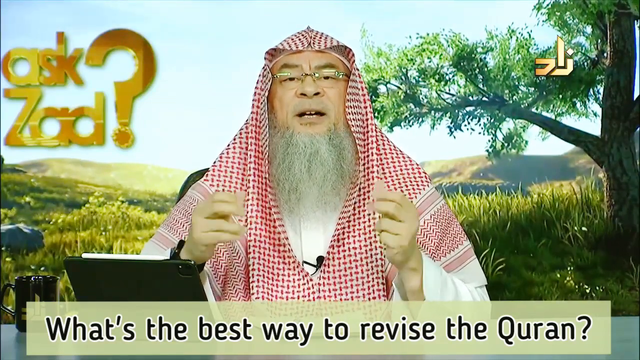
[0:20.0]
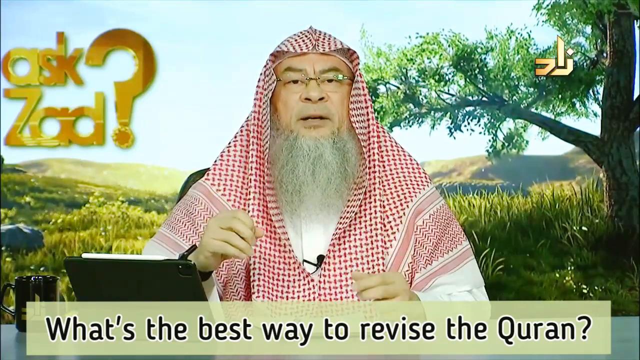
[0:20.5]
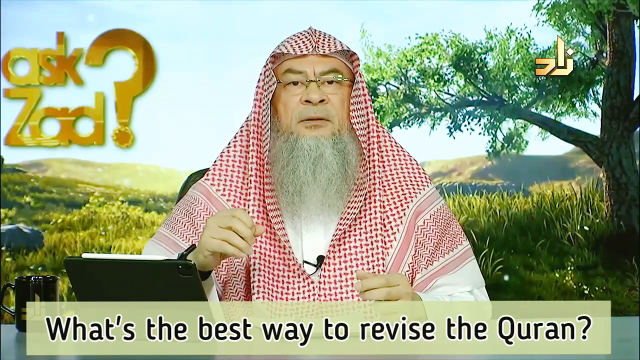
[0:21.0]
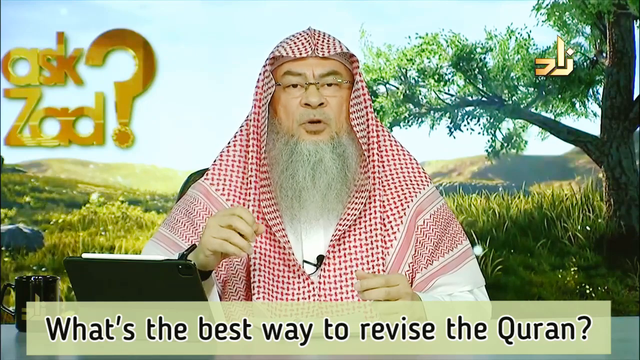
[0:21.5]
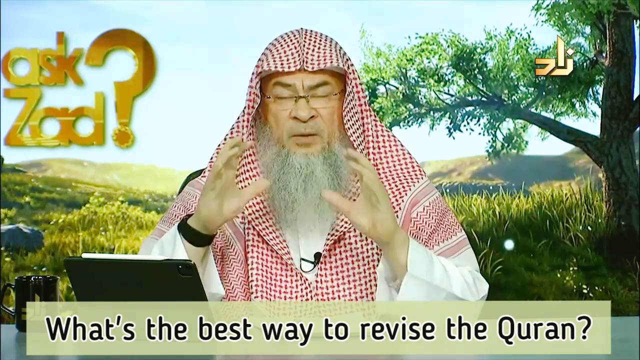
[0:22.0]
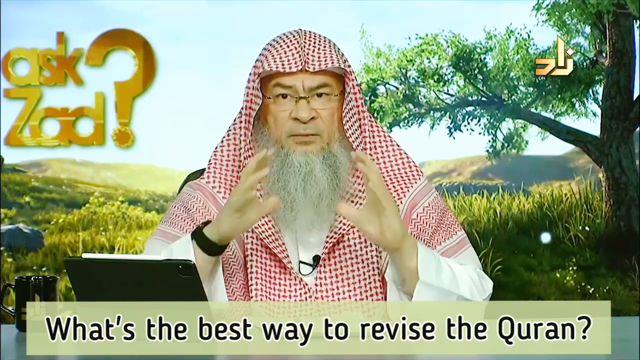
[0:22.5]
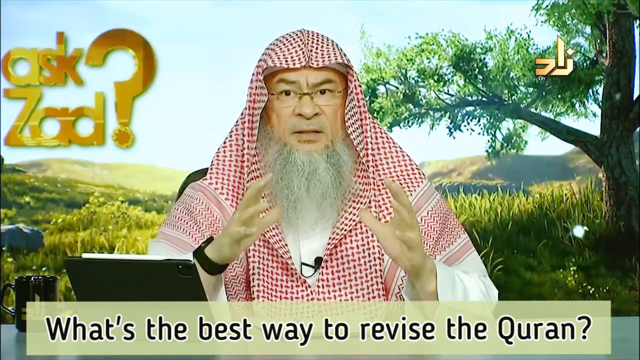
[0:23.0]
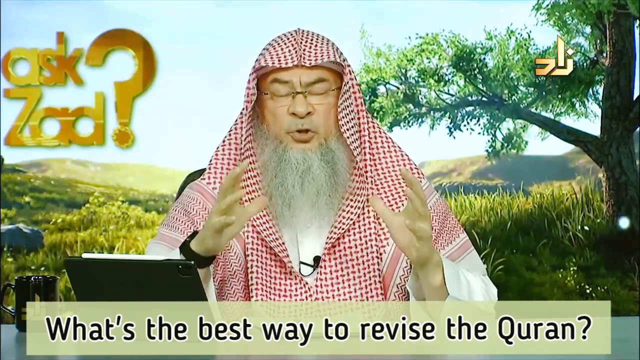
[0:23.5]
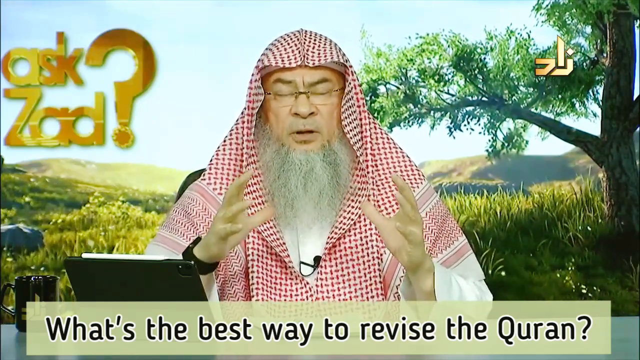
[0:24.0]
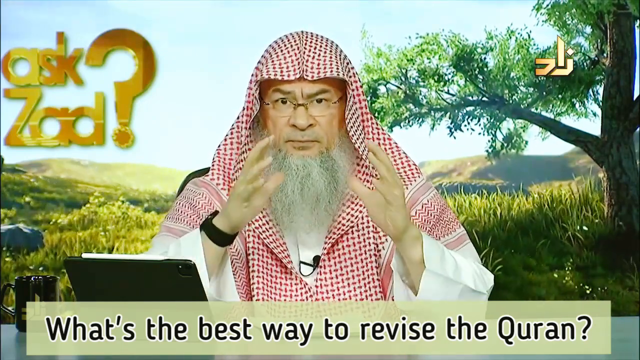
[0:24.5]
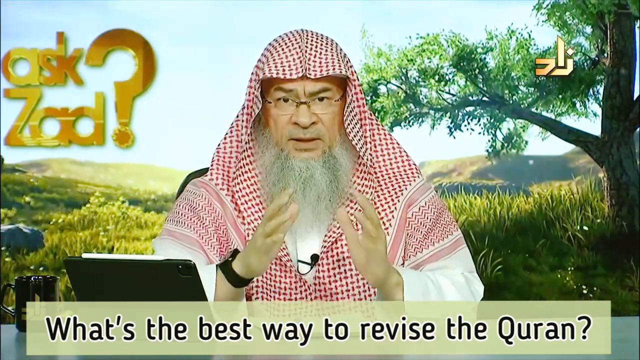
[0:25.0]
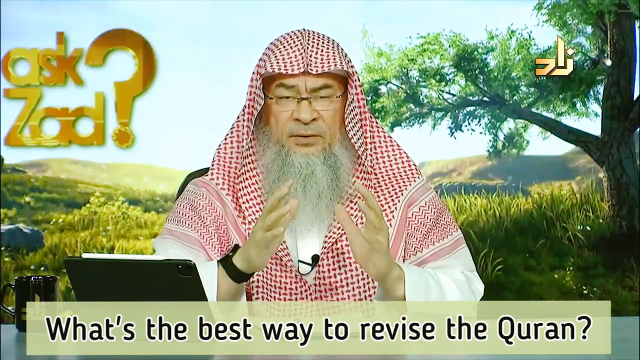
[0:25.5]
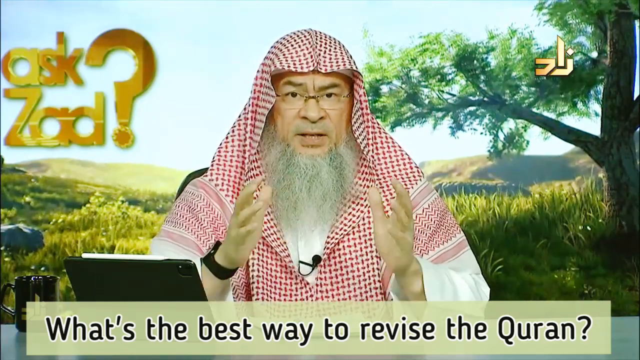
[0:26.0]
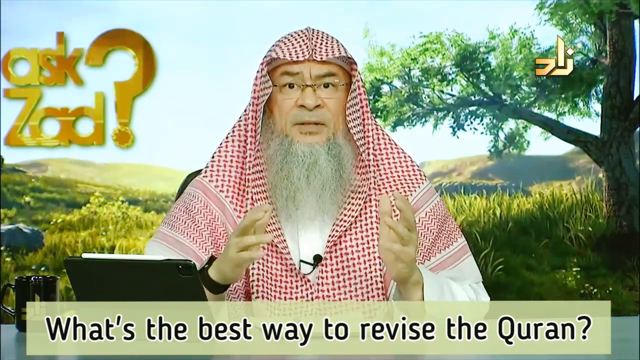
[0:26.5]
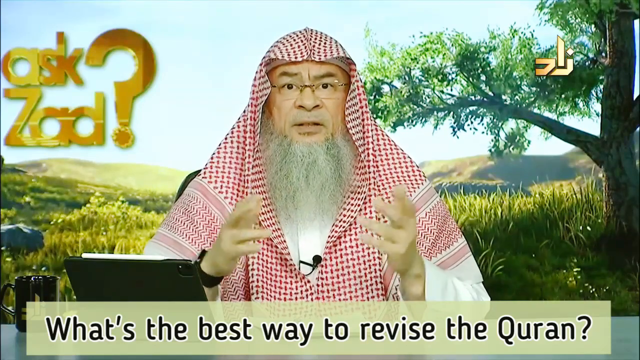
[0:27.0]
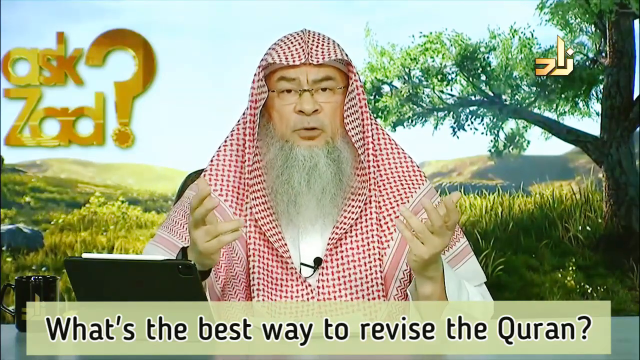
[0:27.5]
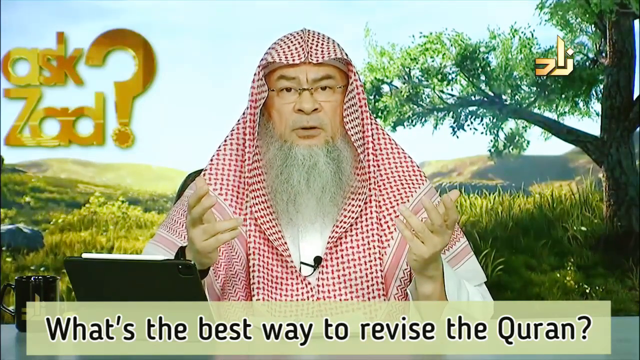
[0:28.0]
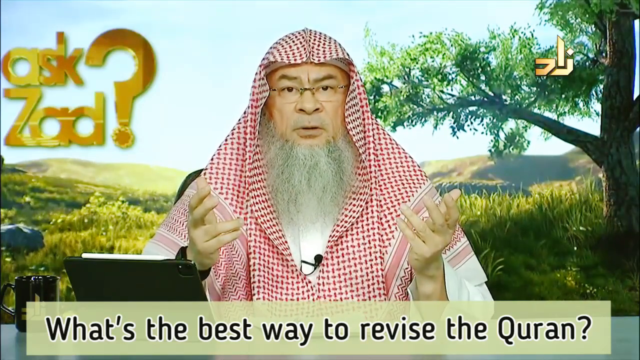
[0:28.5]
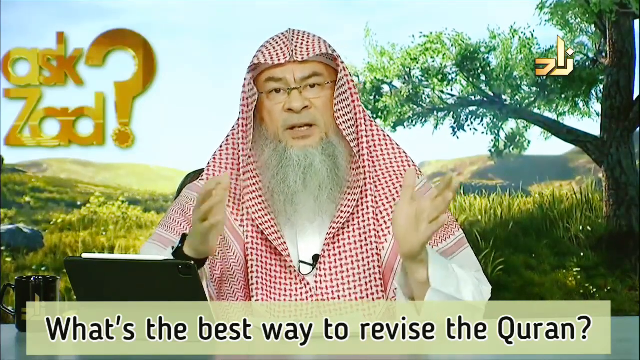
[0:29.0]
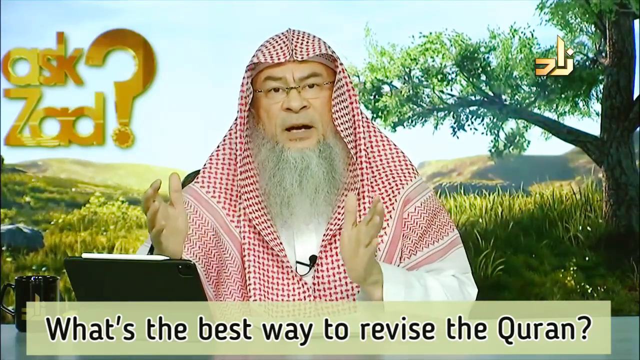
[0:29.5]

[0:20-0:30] The man continues speaking to the camera, making gestures with his hands facing each other and moving them together almost in sync. He then shows his hands up to the sky and gestures towards the right, as if trying to represent something in sequence, and keeps speaking to the camera. On the desk at his far right is a black mug, and next to the mug is an iPad in a black case with an Apple pencil magnetized to the top of it.